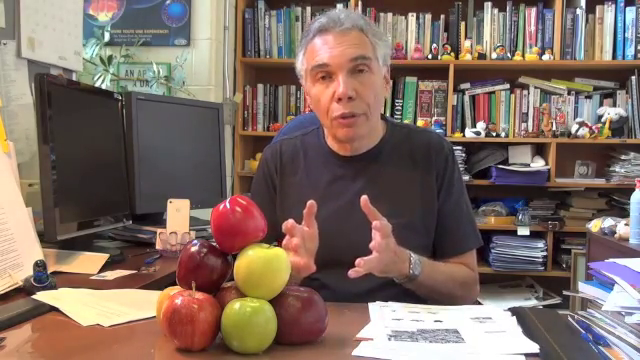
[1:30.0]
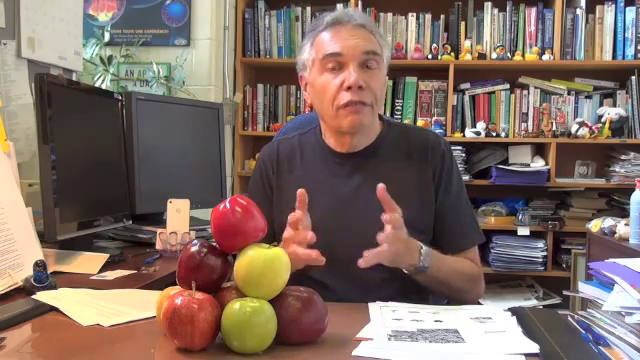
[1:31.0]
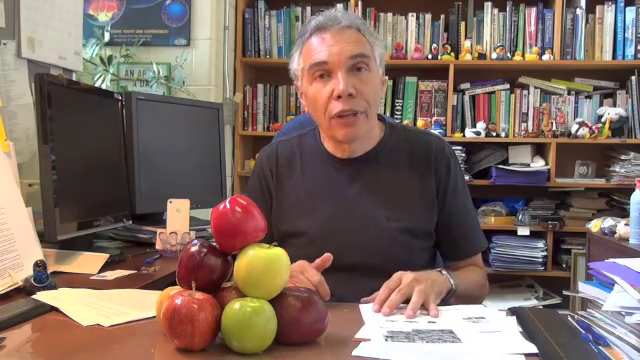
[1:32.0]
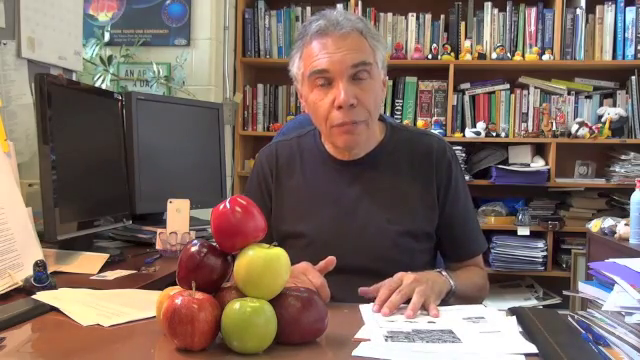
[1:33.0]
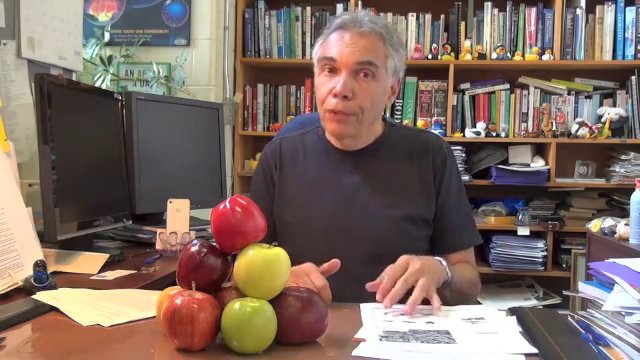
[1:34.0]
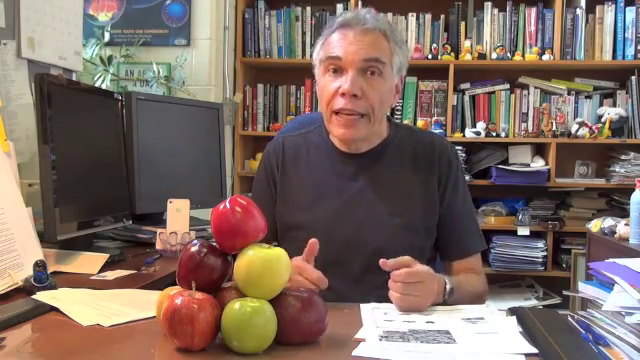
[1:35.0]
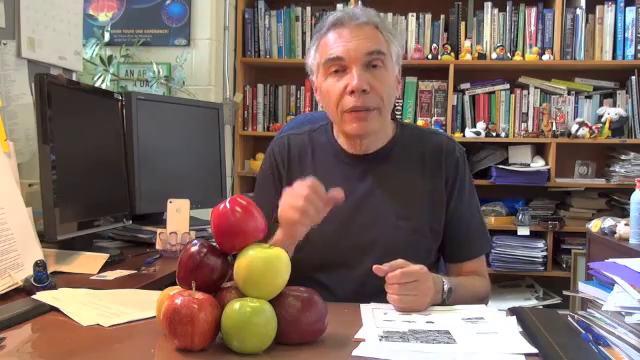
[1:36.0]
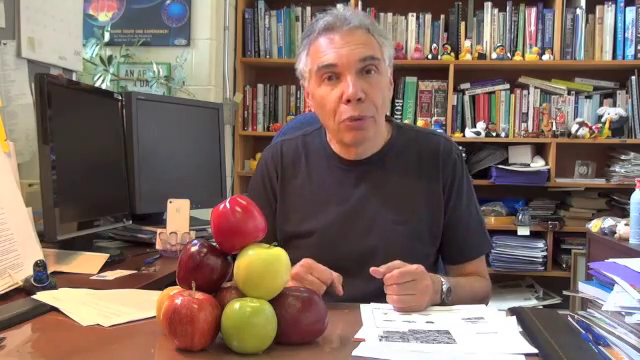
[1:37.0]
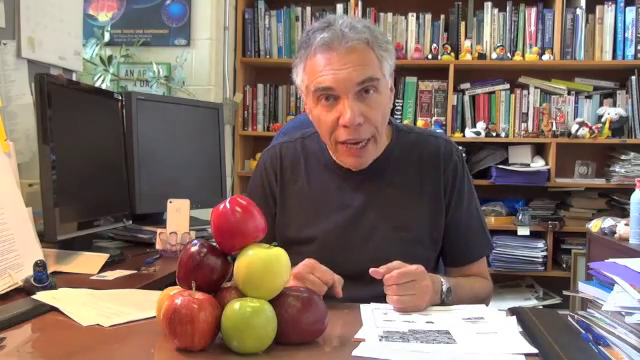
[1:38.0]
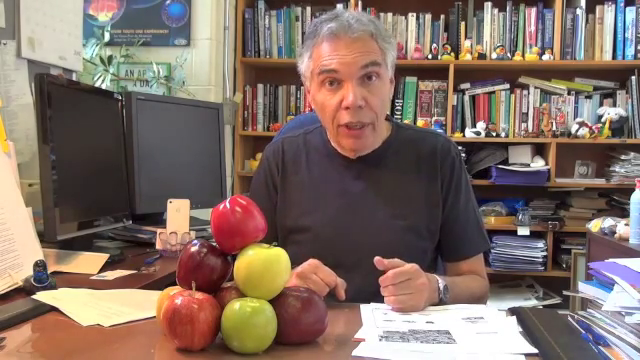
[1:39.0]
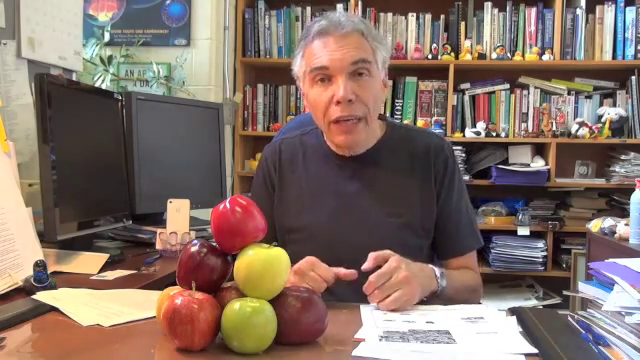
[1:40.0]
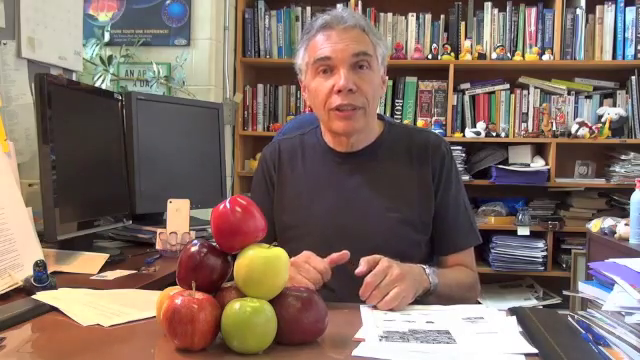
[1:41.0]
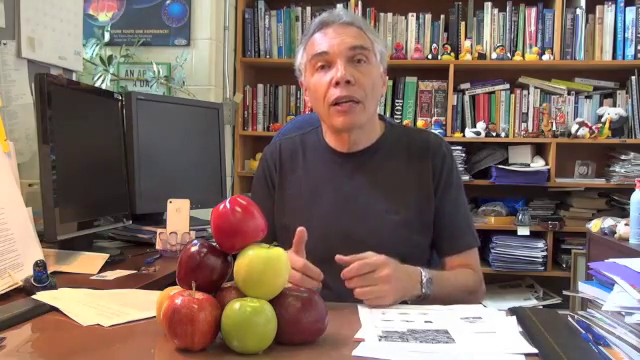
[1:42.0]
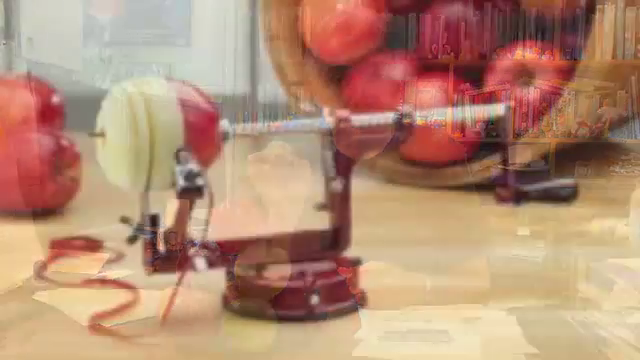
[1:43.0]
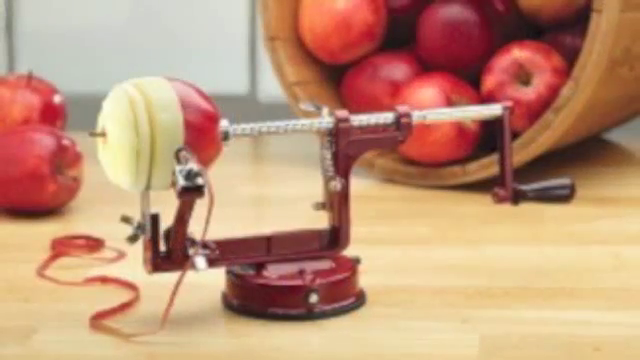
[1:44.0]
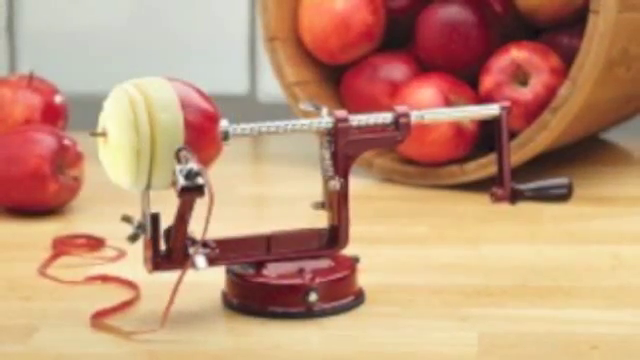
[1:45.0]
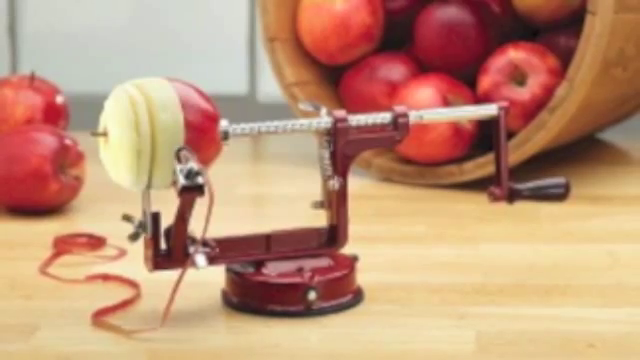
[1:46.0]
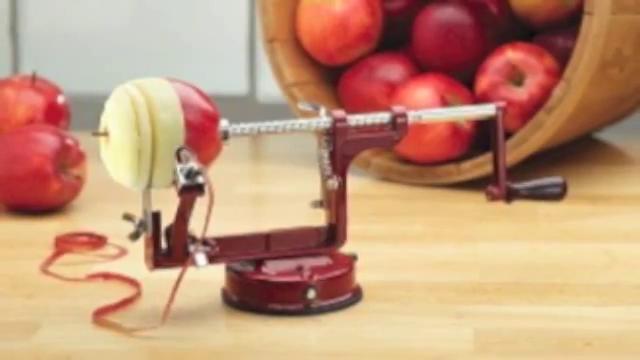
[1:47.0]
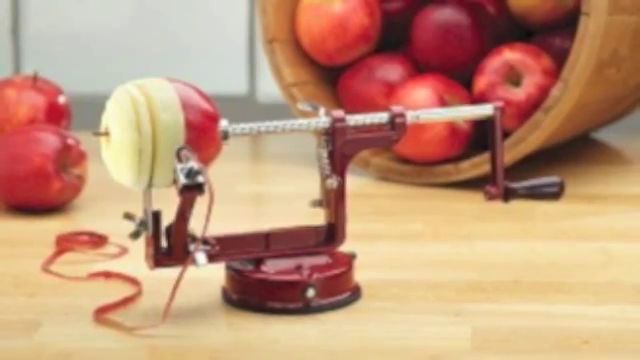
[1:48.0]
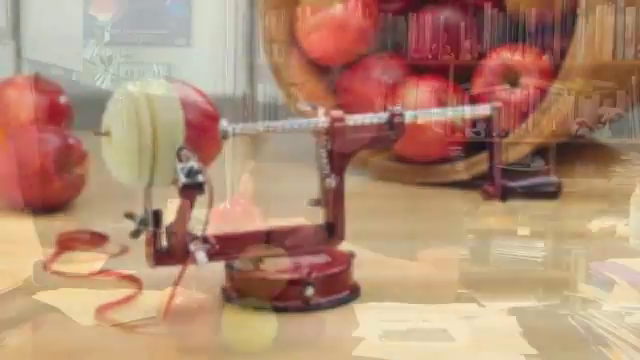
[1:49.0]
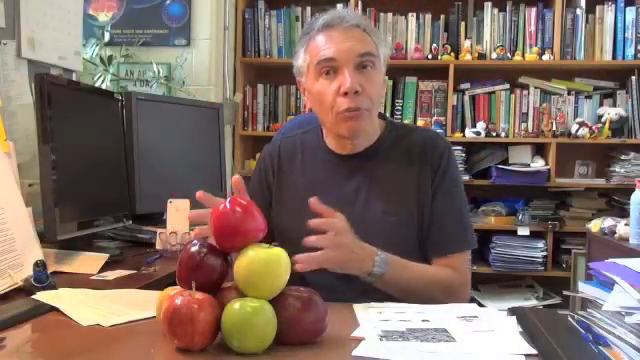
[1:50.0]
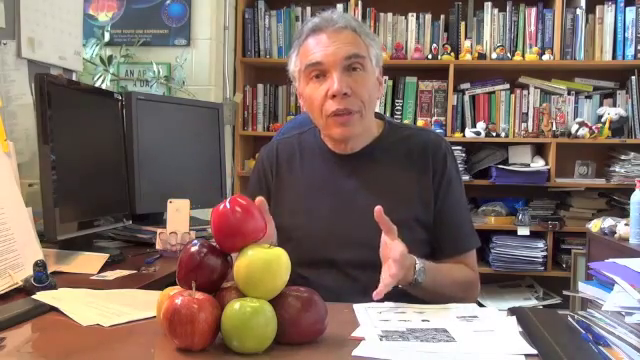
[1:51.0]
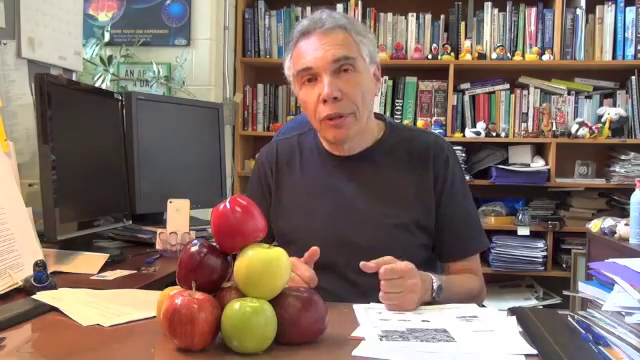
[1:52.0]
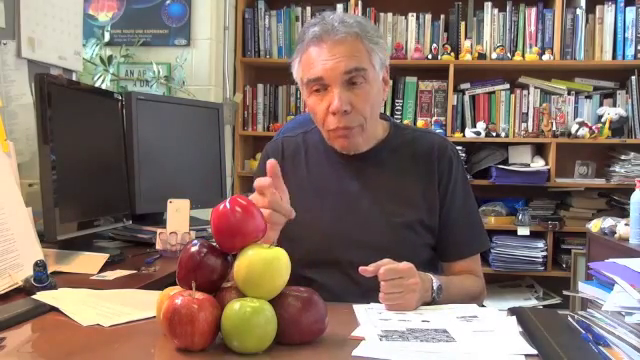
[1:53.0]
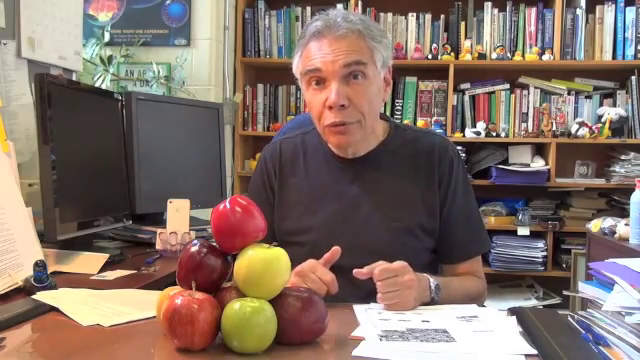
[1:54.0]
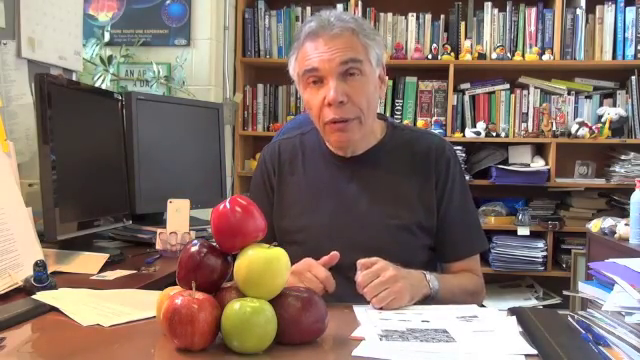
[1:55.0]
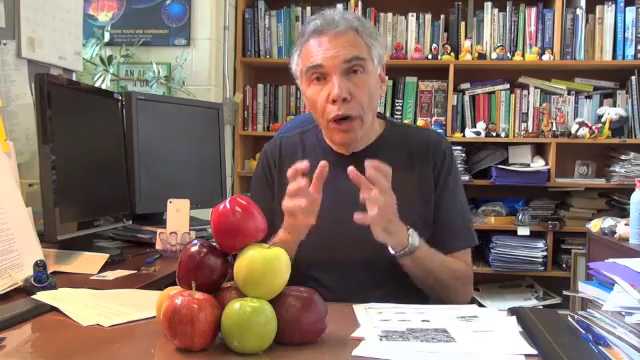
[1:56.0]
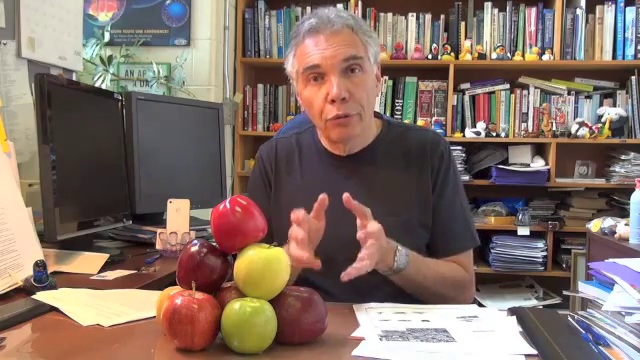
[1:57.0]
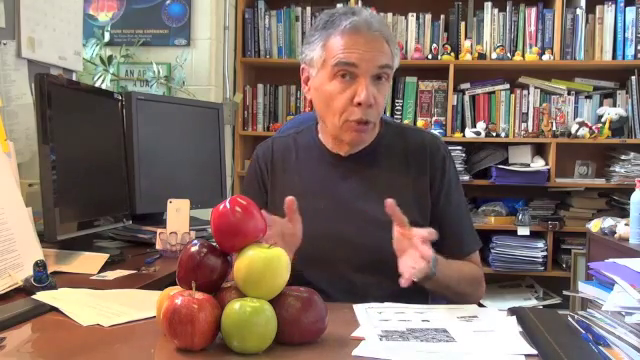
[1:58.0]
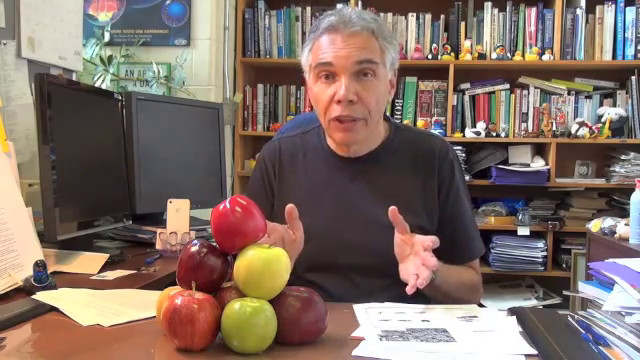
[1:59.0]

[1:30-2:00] A middle-aged man sits at a desk talking directly to the camera. Two computer monitors are to his right, and behind him is a bookshelf filled with books, paper and other paraphernalia. On the desk in front of him are some papers and a stack of apples of different varieties, including red, yellow and green. He speaks while motioning with his hands, and at one point makes a gesture that is sort of not quite pointing but draws attention to the stack of apples. The video then cuts to an image of a mechanical apple peeler with an apple on it, peel coming off. To the left behind it, two apples are sitting on the counter, and to the right behind it is a wooden basket of sorts tipped on its side with apples inside, almost spilling out. After a little while on this still image, the video goes back to the man at his desk, who continues to speak to the camera and move his hands, and at one point points to the stack of apples in front of him.